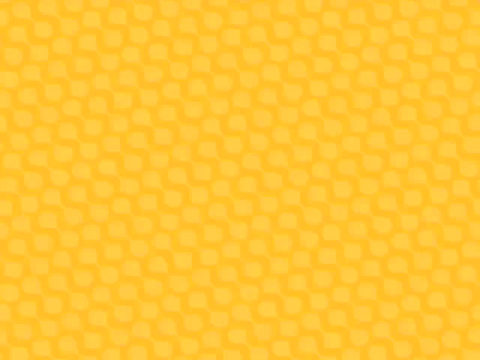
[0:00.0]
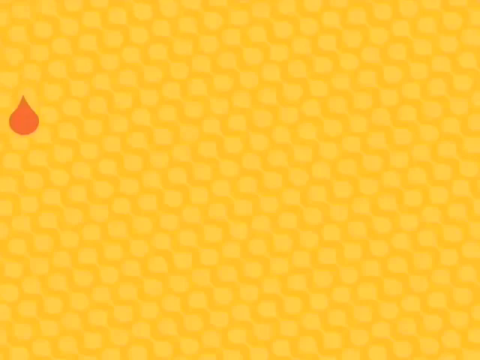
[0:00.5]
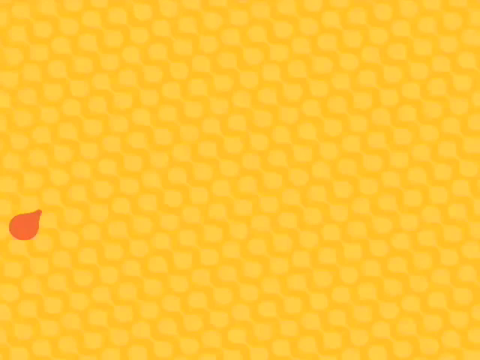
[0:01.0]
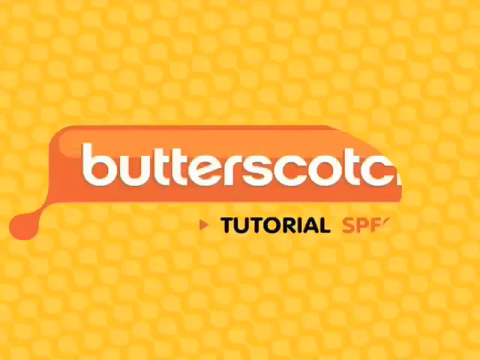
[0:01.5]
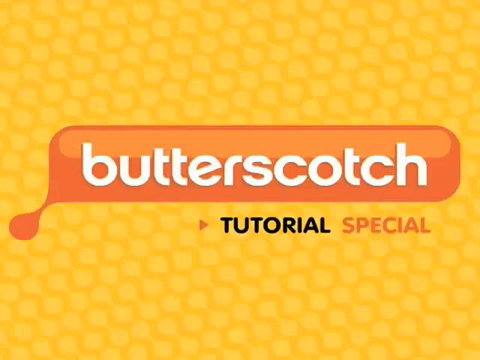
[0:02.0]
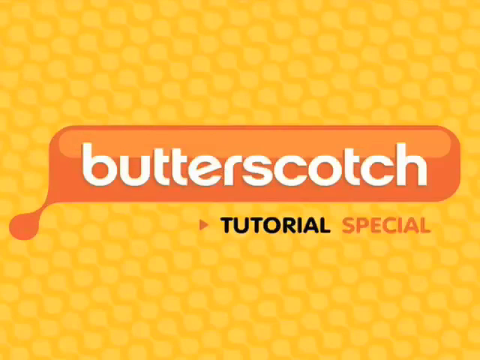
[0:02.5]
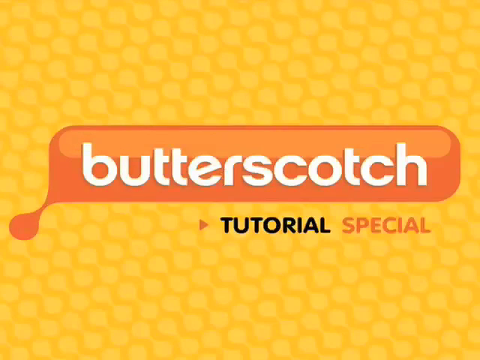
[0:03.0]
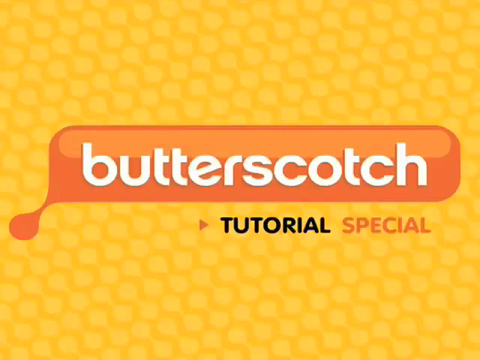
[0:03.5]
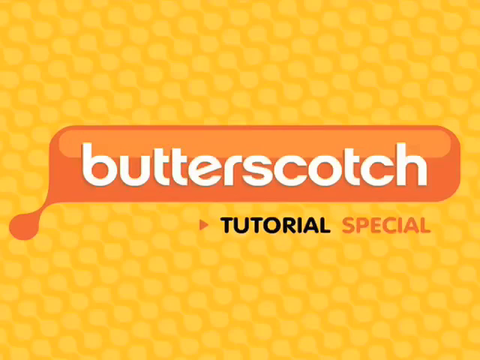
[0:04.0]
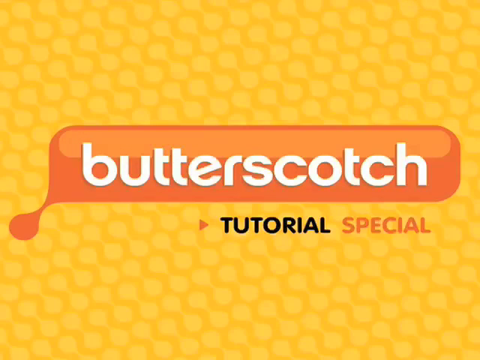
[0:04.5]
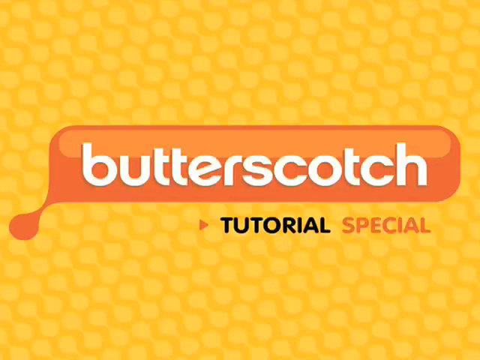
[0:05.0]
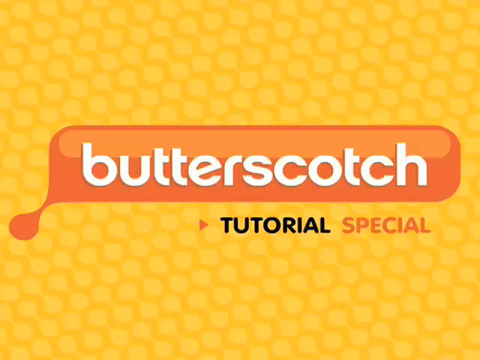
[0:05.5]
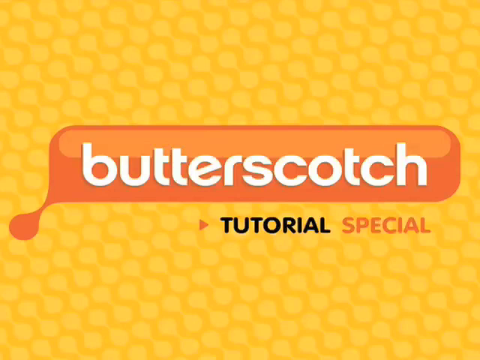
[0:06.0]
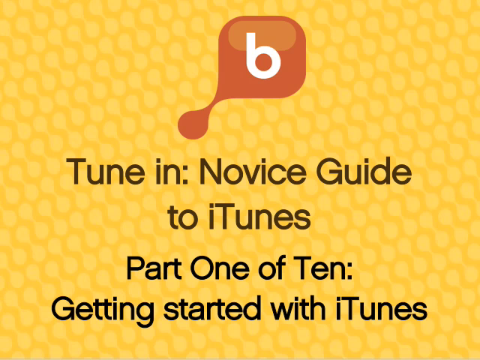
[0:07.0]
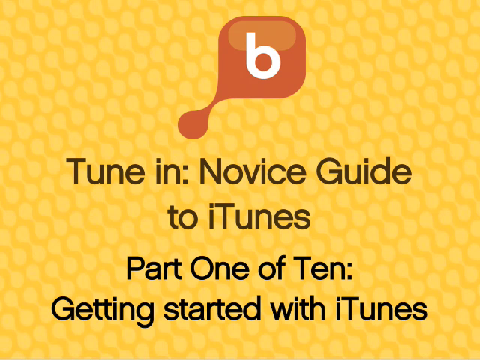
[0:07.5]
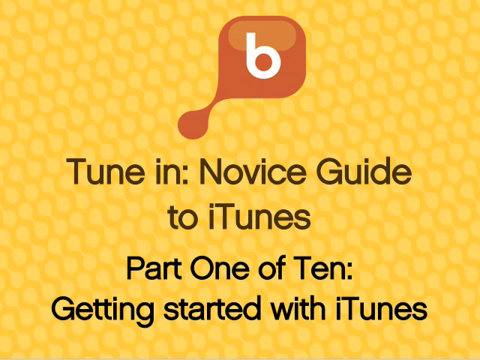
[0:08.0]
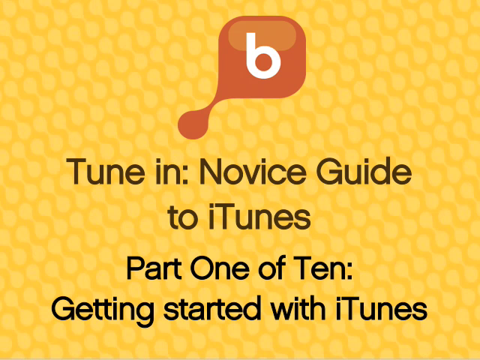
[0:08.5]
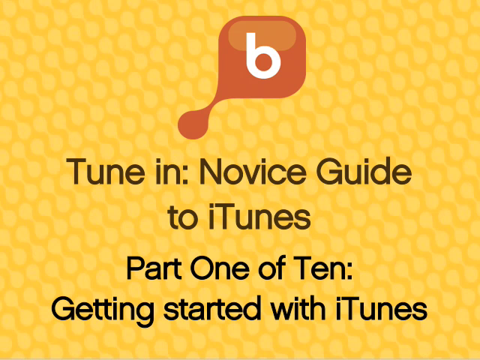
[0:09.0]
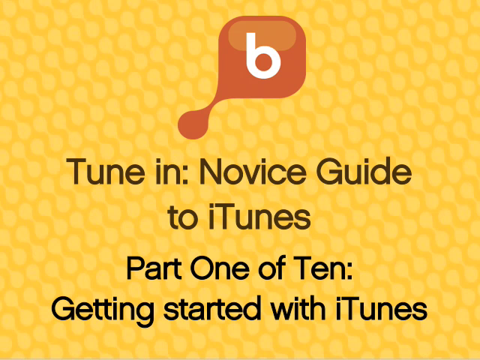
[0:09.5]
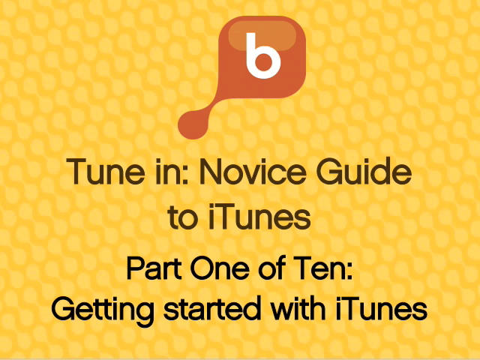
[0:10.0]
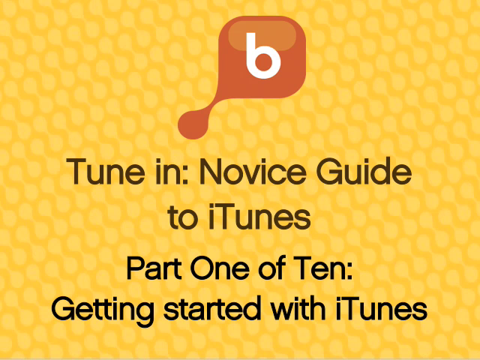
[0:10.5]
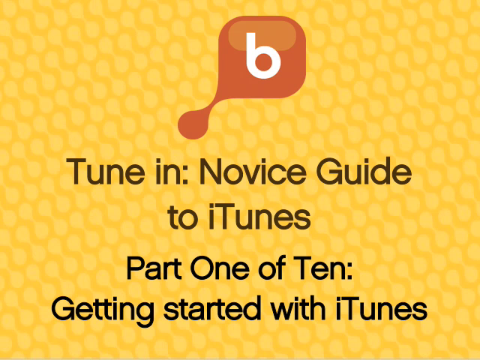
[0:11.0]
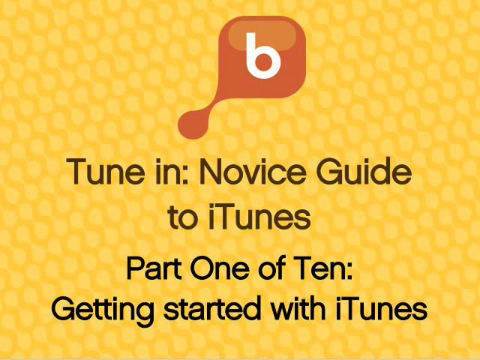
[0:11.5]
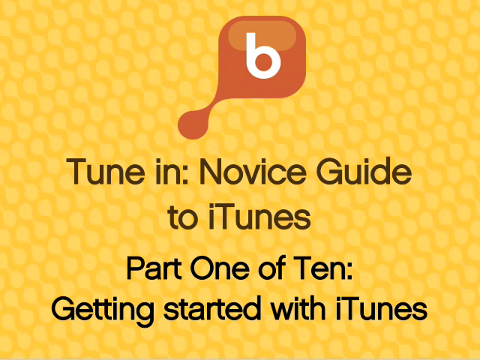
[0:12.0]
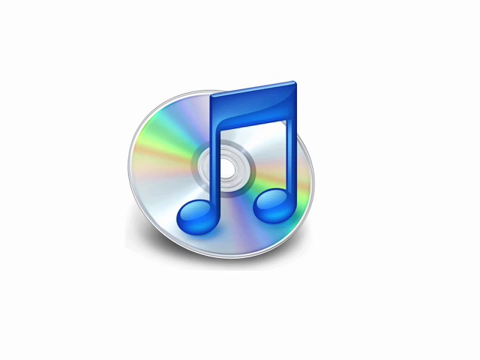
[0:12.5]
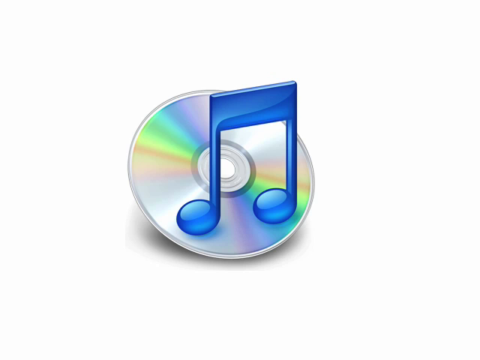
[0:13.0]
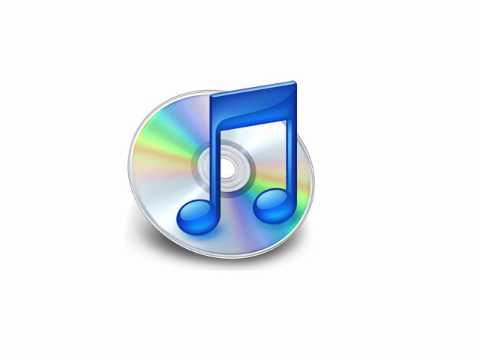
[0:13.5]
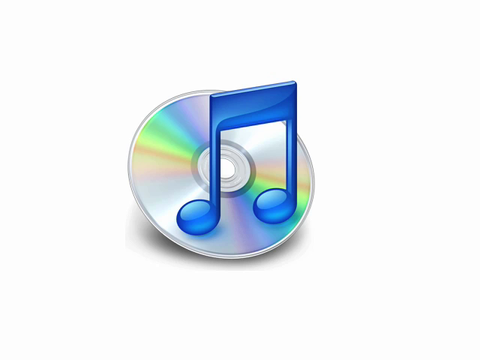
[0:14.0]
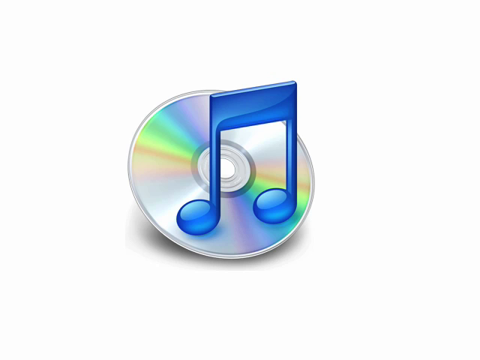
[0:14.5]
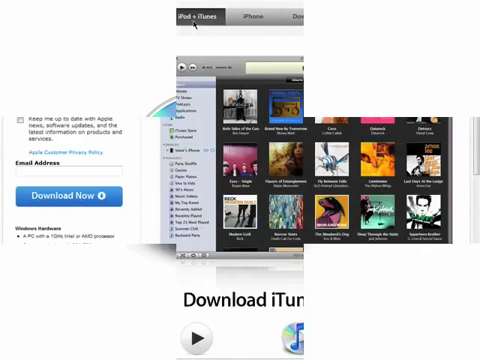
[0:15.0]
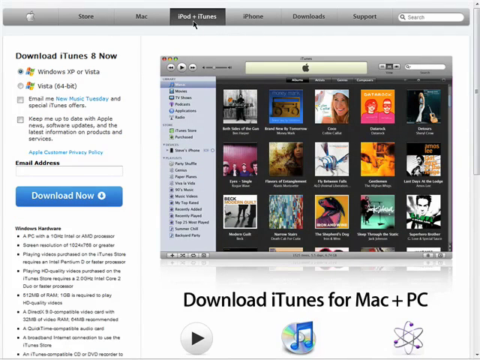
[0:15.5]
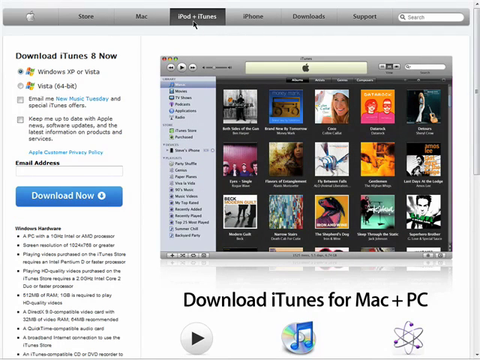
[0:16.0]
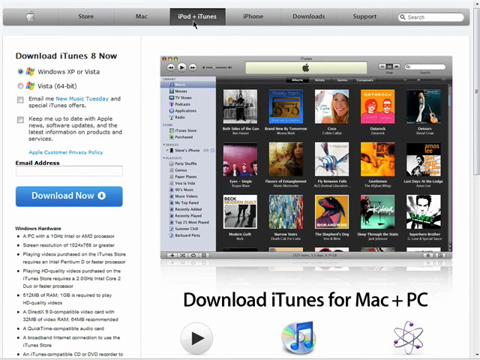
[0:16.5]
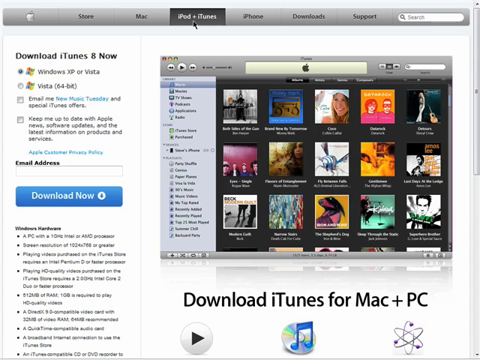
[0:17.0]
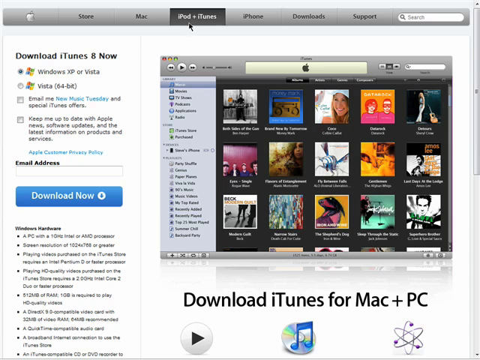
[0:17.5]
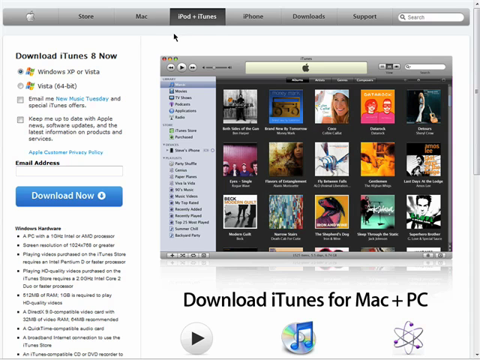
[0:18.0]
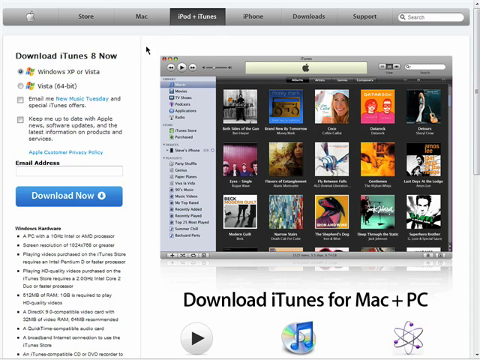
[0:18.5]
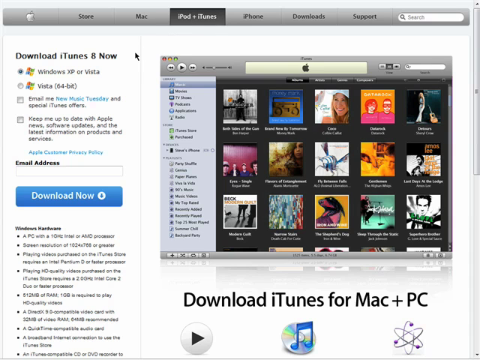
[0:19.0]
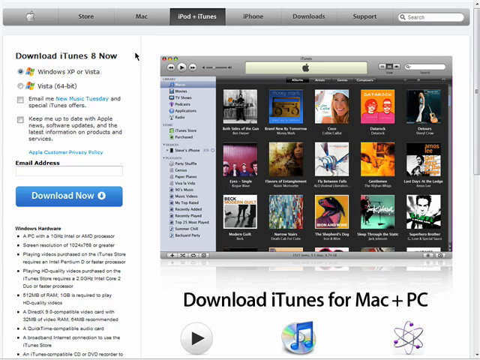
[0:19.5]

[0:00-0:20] The background is yellow with yellow squares on it. Drops come in and the word "butterscotch" appears in white. Underneath it, on the right side, is an orange triangle-like shape pointing toward the word "tutorial" in black, followed by "special" in the same color. The screen stays like this for a while, then changes to a white "B", apparently for Butterscotch, on the same color background. Text including "novice guide" appears, and underneath in black it says "part one of 10, getting started with iTunes." This stays up for a few seconds, then a CD with a blue music note on it appears. An iTunes store page reads "download iTunes for Mac and PC" and "Download iTunes now," with a button. The mouse pointer moves toward the part that says "download now."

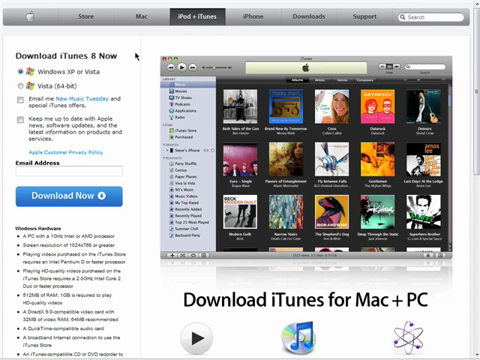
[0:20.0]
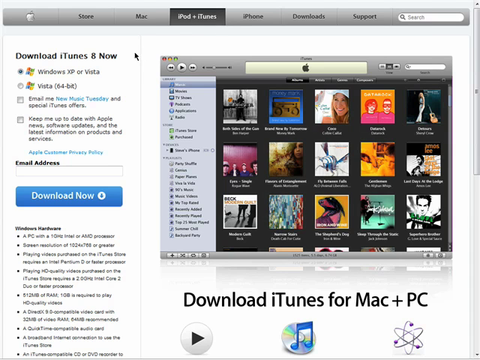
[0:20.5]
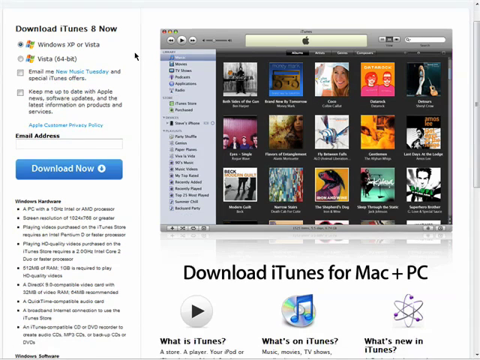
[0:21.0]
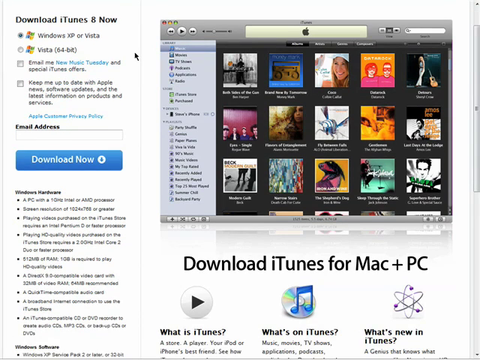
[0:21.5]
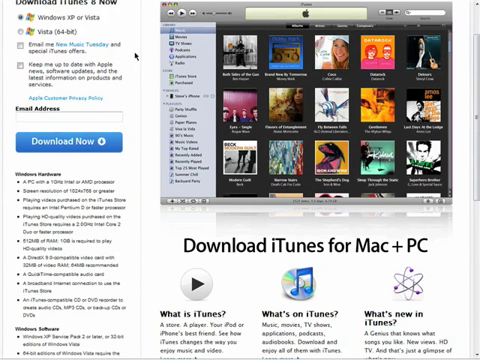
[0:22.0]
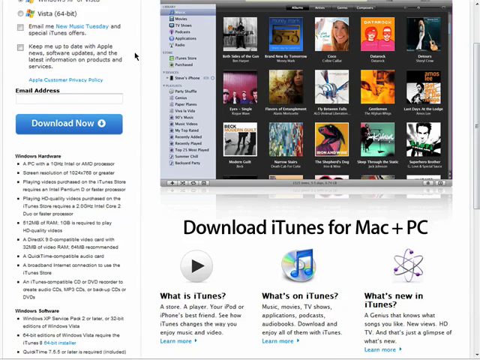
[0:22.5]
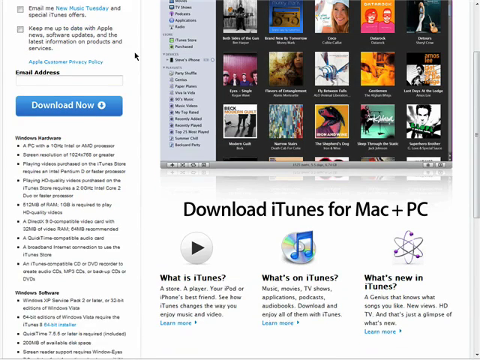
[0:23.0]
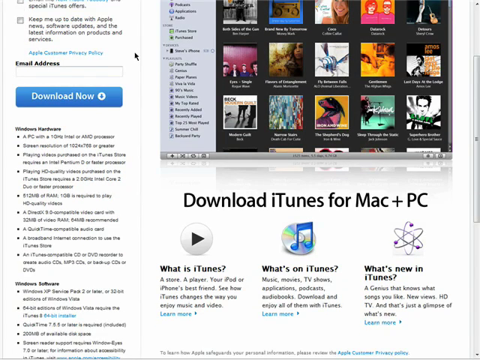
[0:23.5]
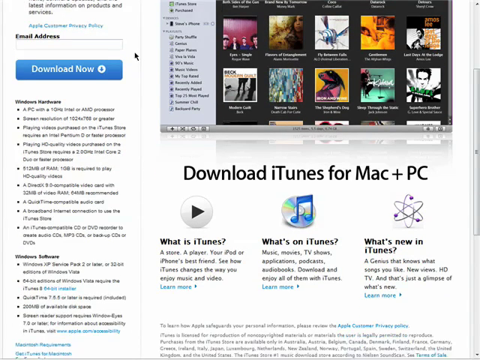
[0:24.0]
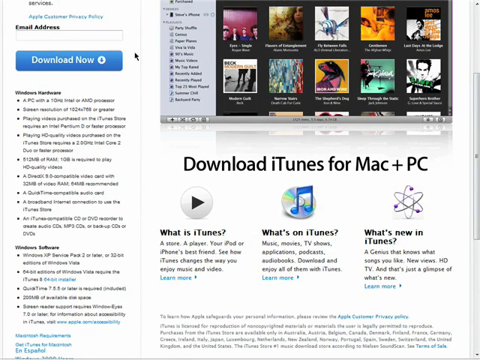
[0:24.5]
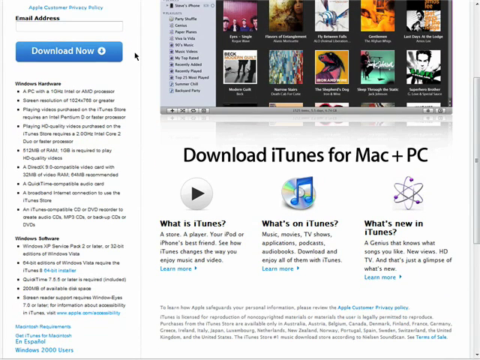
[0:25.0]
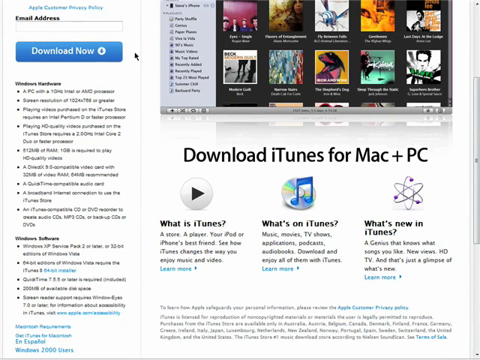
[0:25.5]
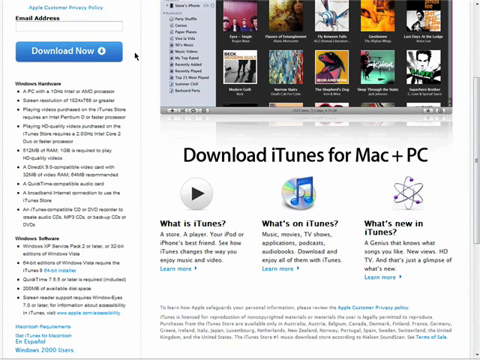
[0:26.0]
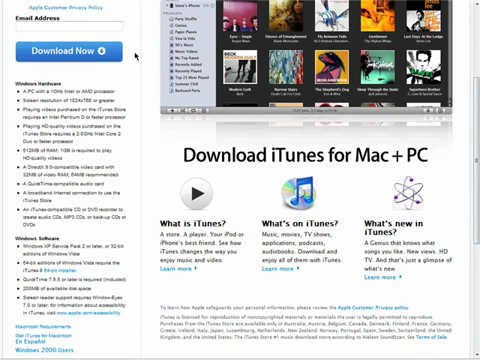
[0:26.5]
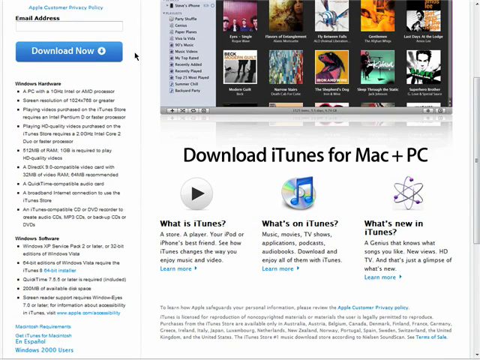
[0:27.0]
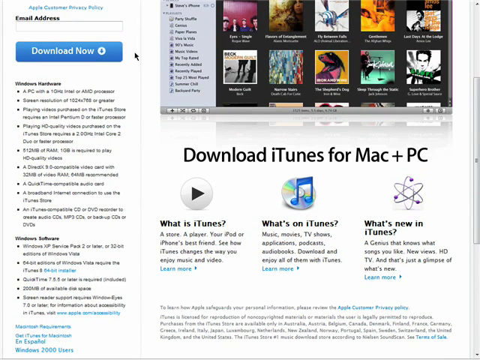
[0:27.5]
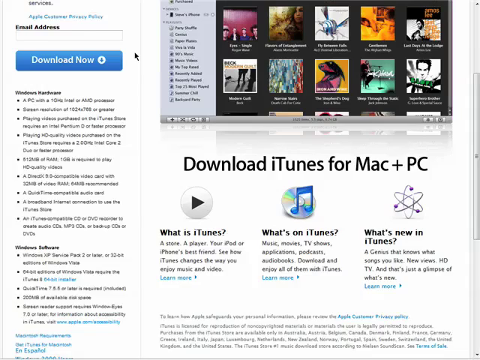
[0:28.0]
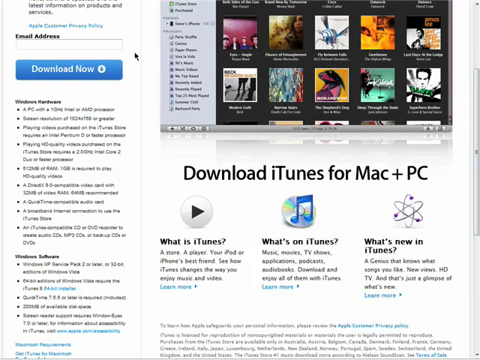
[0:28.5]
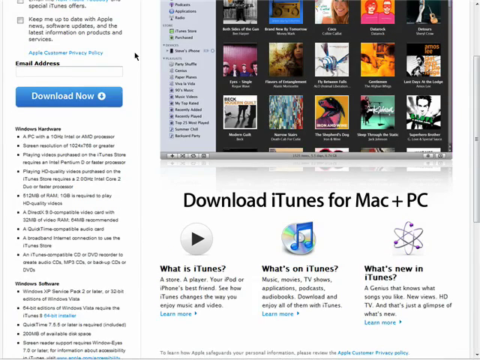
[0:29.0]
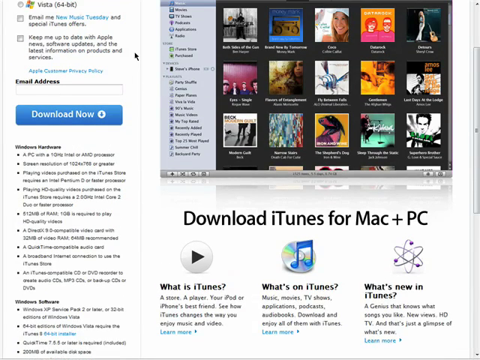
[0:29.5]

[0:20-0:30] The same page remains on screen. On the left-hand side it says "email address," and below is a blue rectangle with "download now" in white. A blue arrow on a white circle points down. On the right side it says "download iTunes for Mac and PC," and the CD with a blue double music note is visible. The person scrolls down to text reading "What is iTunes?", "What's on iTunes?" and "What's new in iTunes?", then apparently scrolls back up after a quick glimpse.